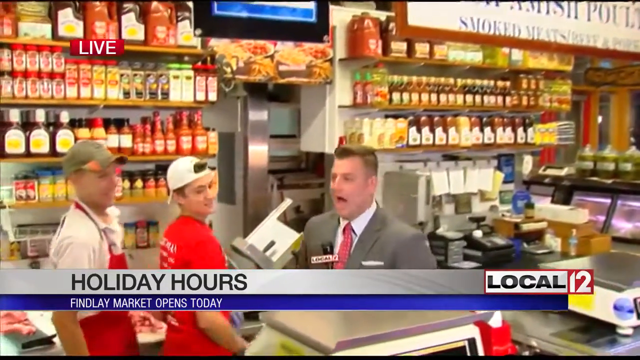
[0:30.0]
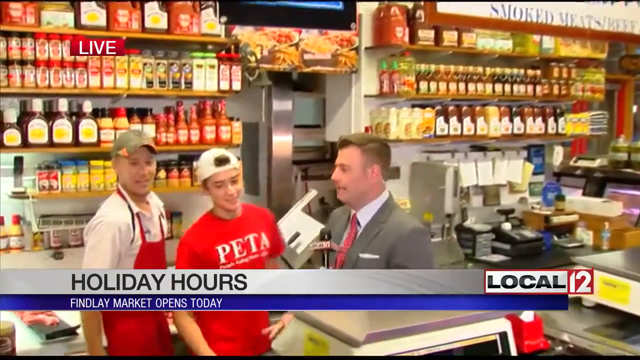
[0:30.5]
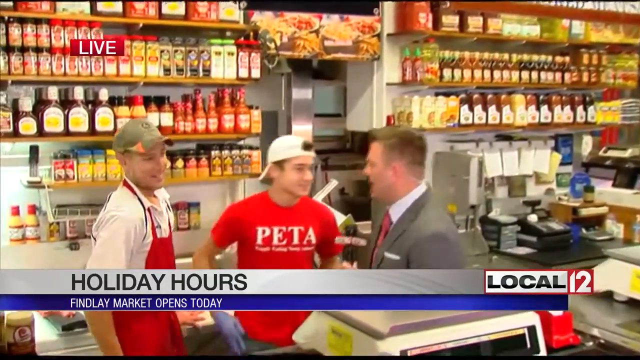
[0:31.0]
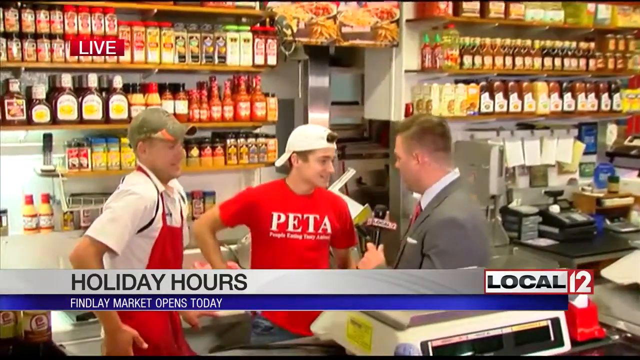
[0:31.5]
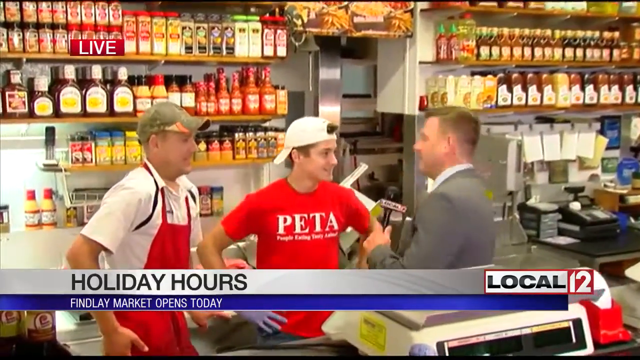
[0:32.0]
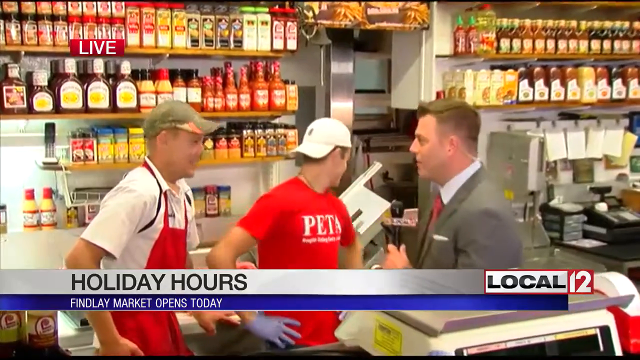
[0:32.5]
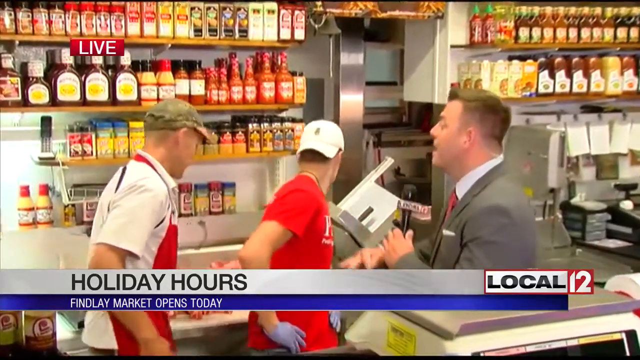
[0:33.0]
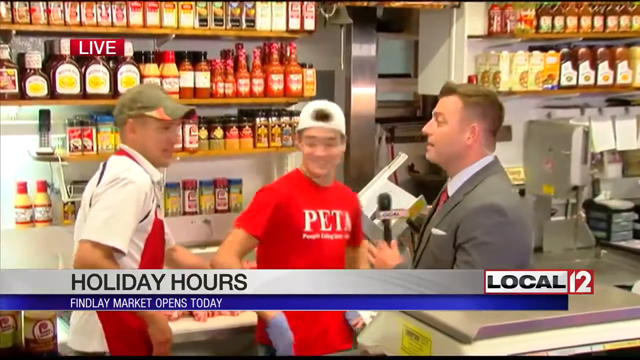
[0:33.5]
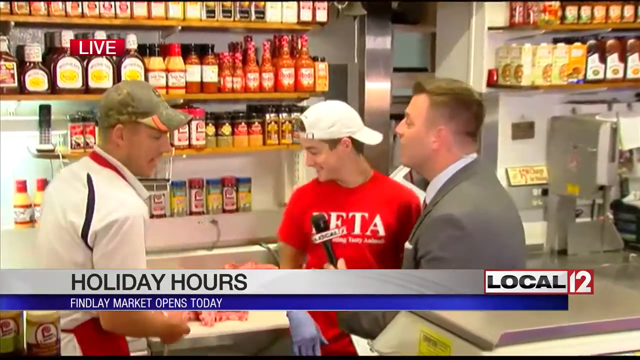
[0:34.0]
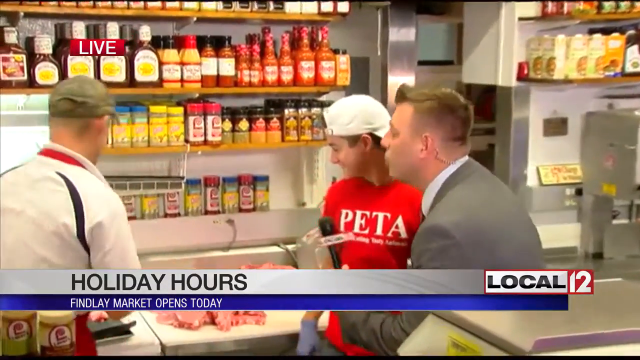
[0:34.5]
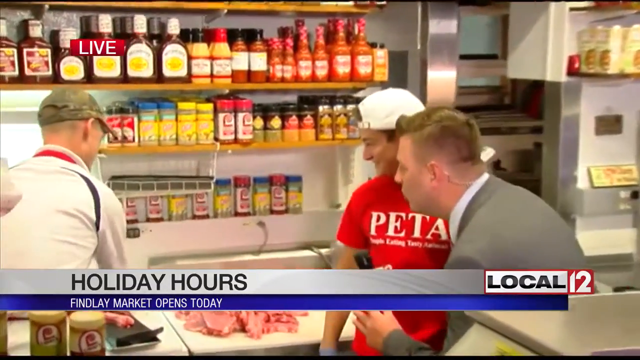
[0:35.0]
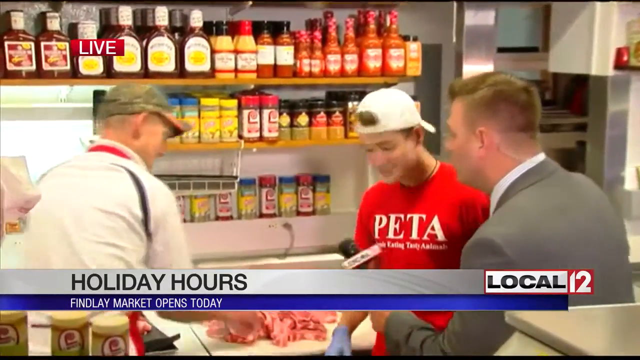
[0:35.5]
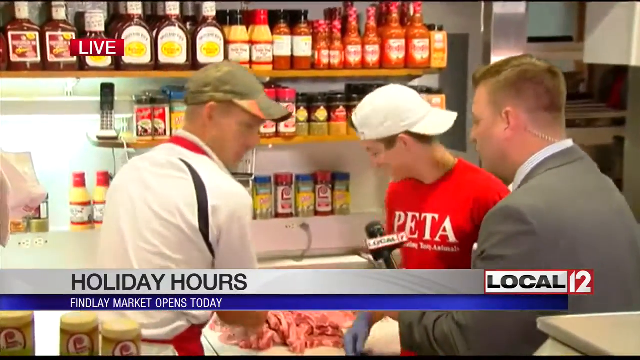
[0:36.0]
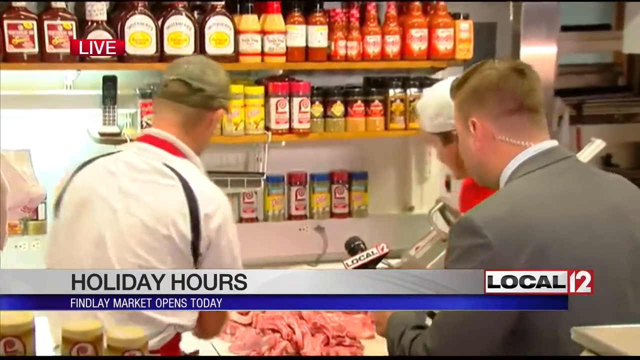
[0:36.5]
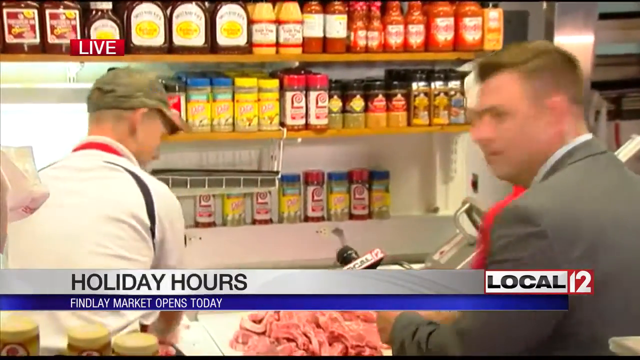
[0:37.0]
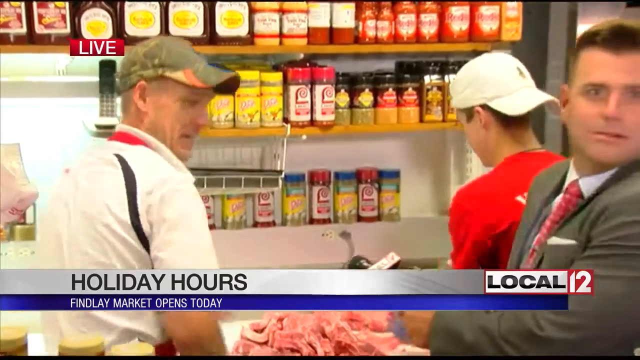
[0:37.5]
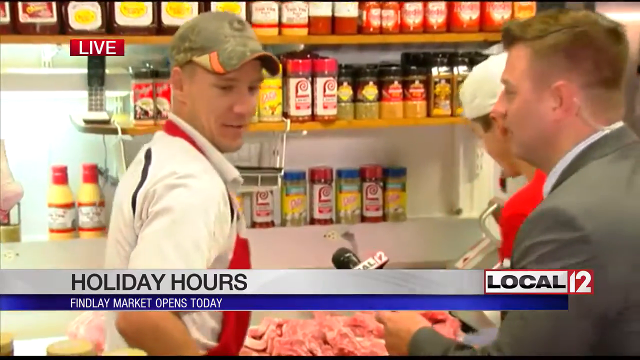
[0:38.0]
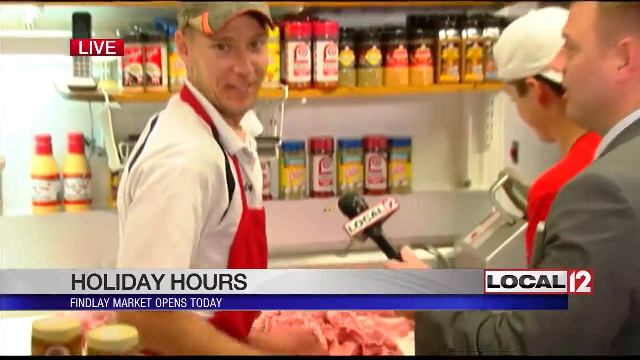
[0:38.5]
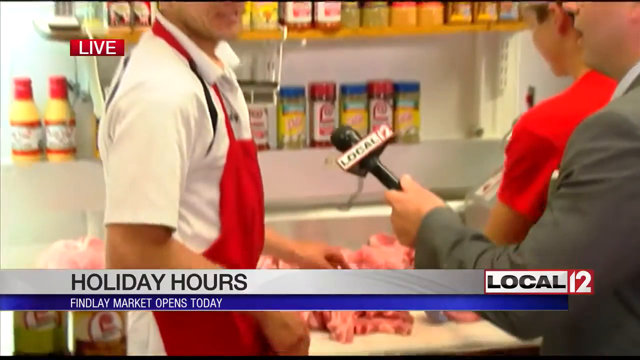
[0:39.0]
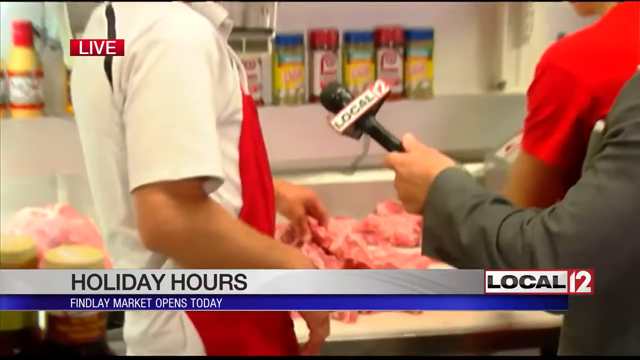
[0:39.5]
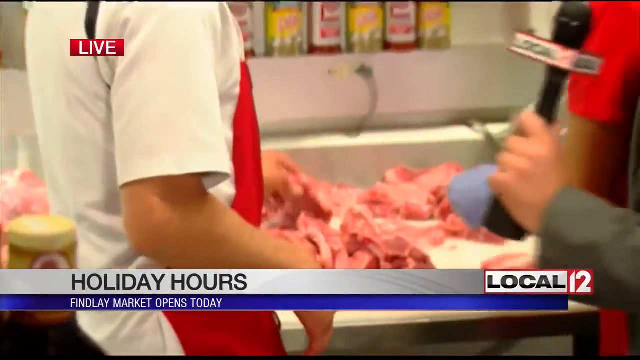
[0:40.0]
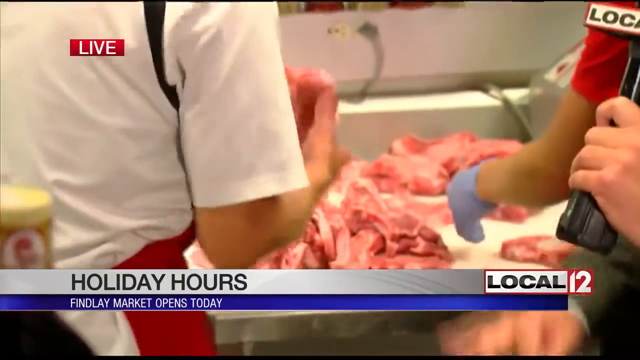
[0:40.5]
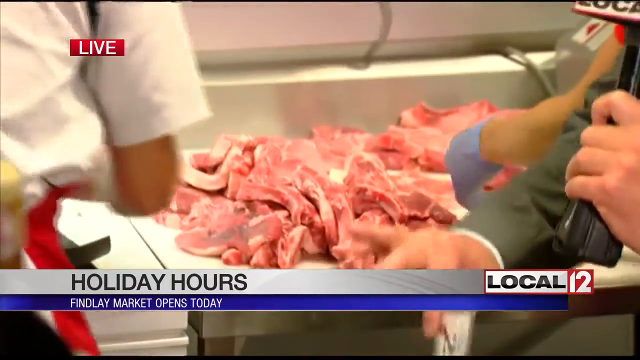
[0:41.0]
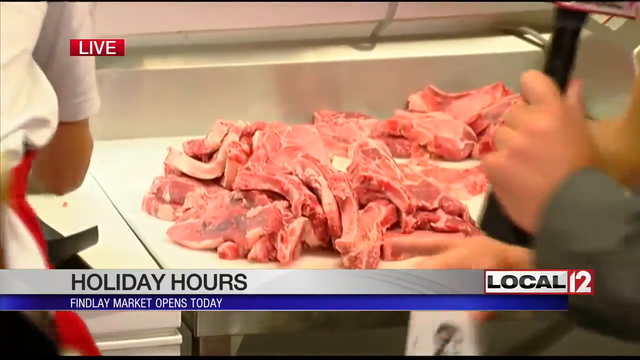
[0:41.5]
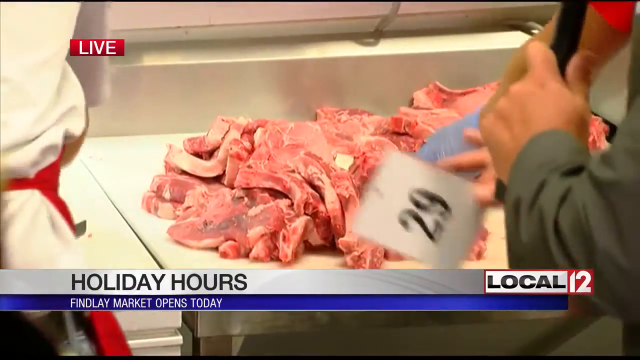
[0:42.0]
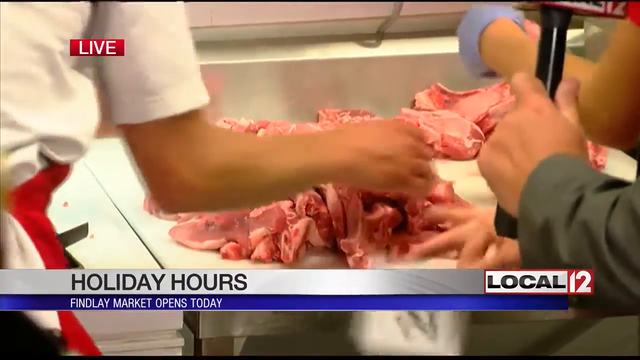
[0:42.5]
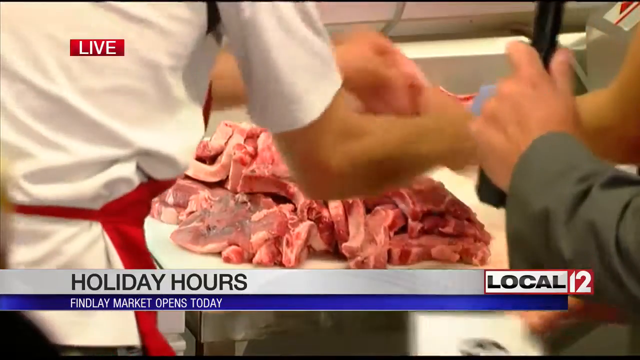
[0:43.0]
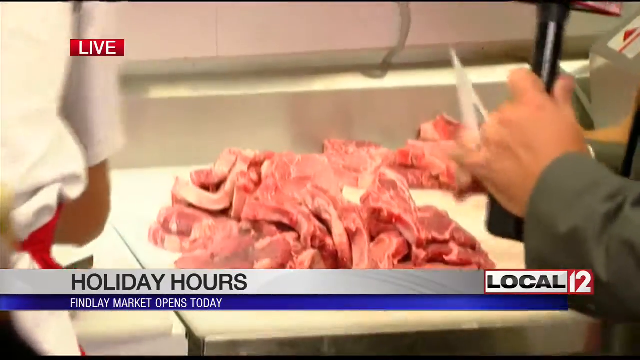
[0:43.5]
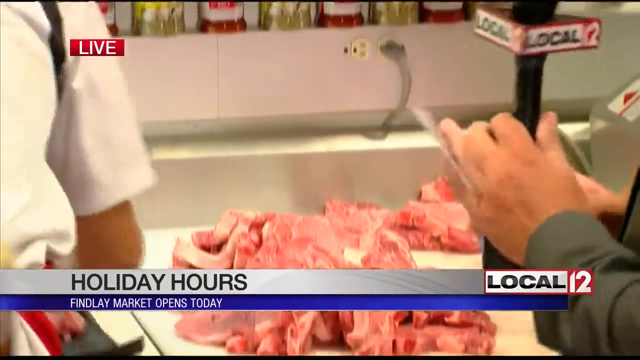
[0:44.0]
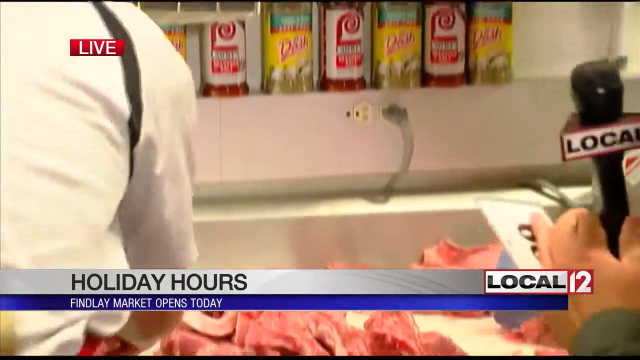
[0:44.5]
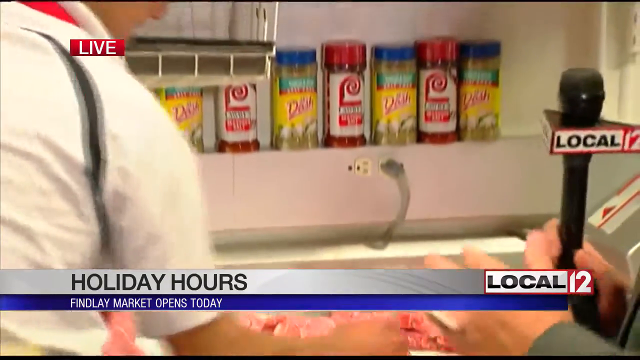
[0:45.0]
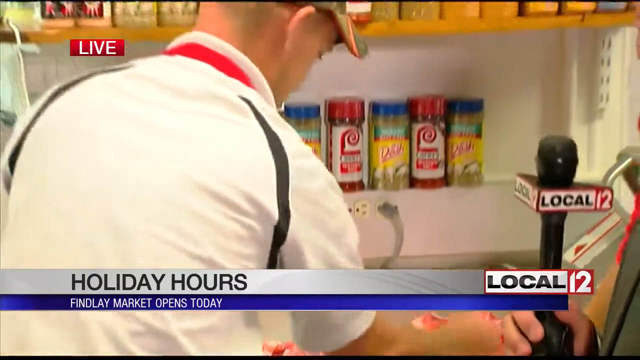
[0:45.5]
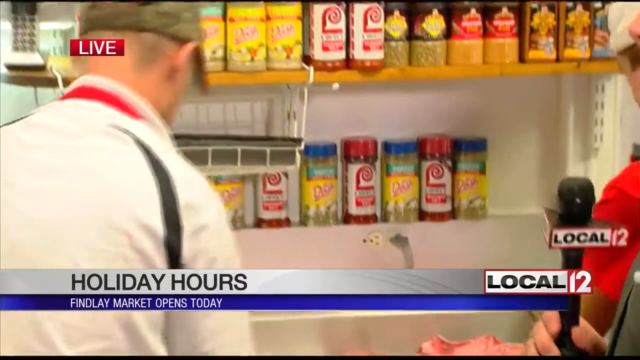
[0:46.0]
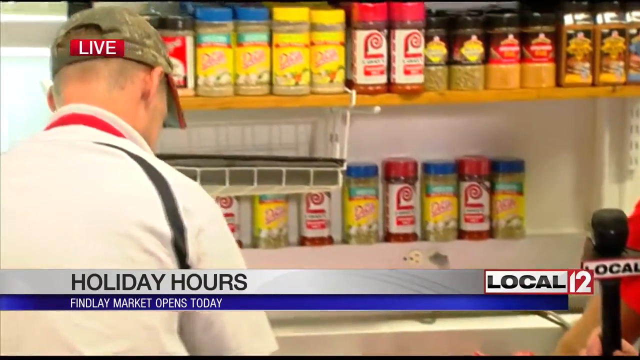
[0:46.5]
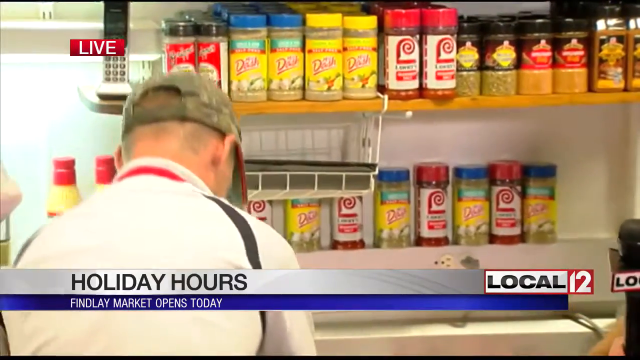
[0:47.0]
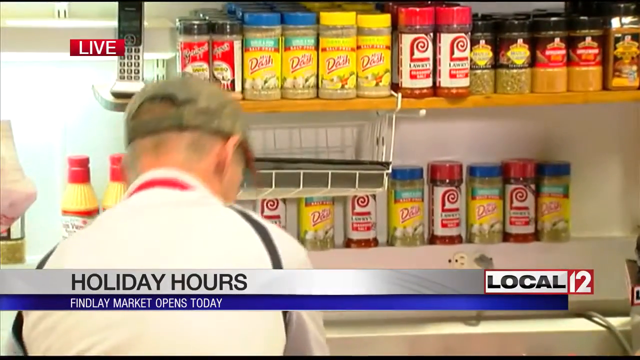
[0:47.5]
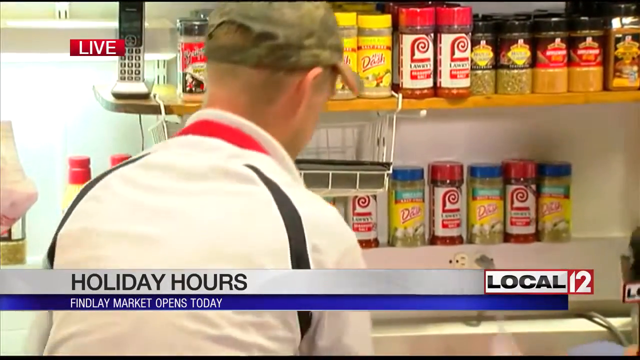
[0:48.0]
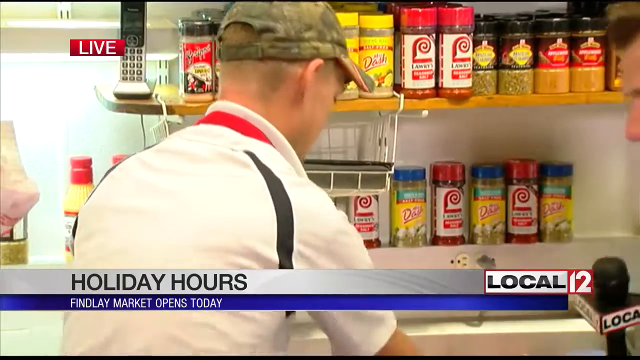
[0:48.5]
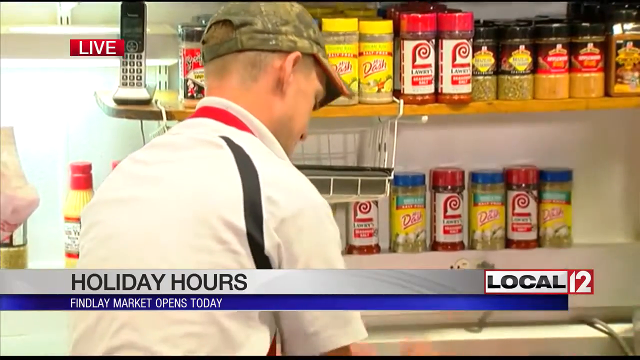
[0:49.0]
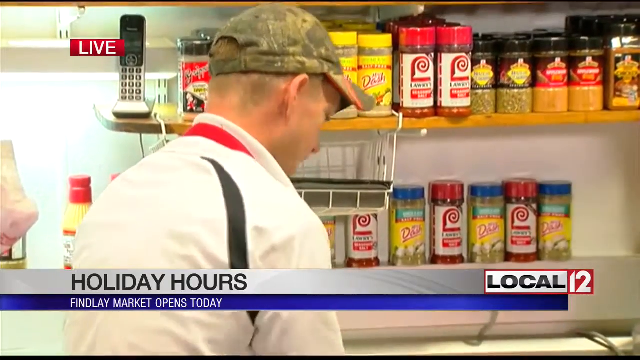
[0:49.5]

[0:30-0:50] Adam walks toward the two young adults working in the deli, speaking with the microphone in his left hand. He becomes fairly energetic, moving his head around and moving his right hand. The young adult in front of him, in the red shirt, puts his hands on his hips; his shirt reads "Pita." He laughs and smiles. Both young men look to their left at the same time, toward a table with meat on it. The one in the white hat turns to his right and looks at the table of cut-up meat, while the man to the left, who seems to be a bit older, starts picking up pieces of meat and placing them to the left. The camera zooms in on the meat: cut-up slices of what looks like steak. As the man in the green hat works, he looks back at the camera to speak, continues speaking to the reporter, then turns back around and keeps placing meat to the left.